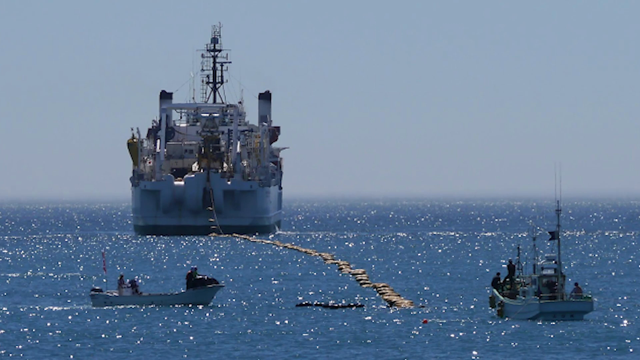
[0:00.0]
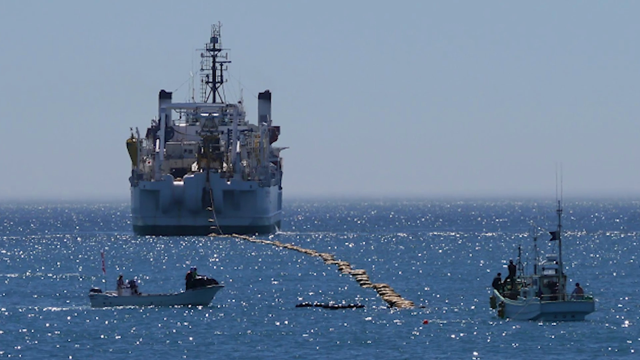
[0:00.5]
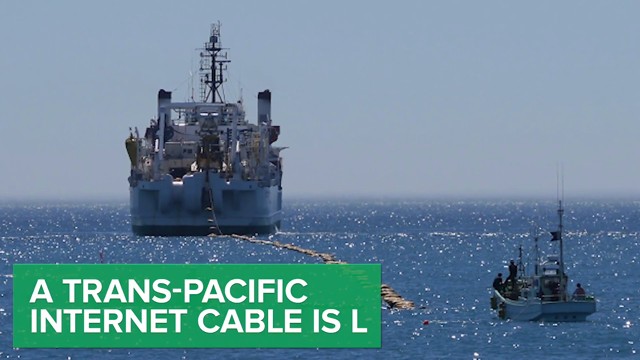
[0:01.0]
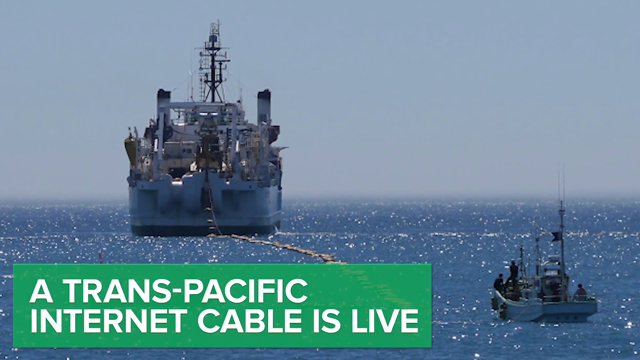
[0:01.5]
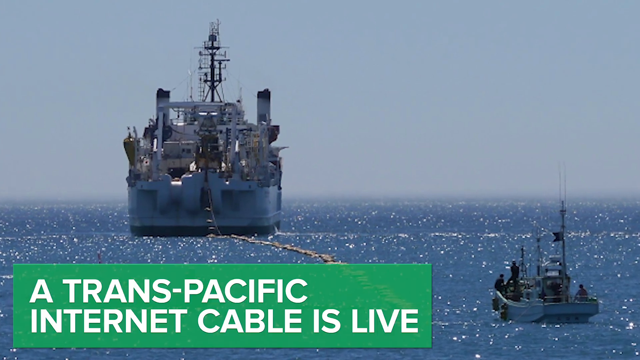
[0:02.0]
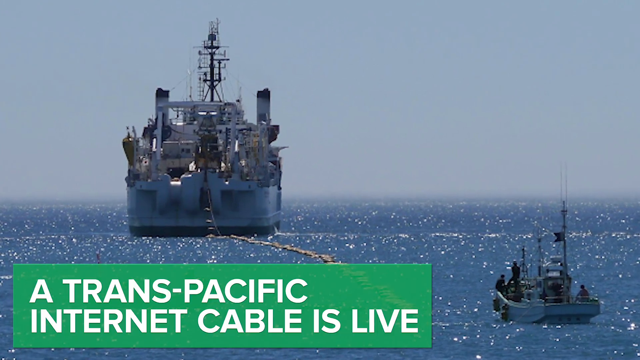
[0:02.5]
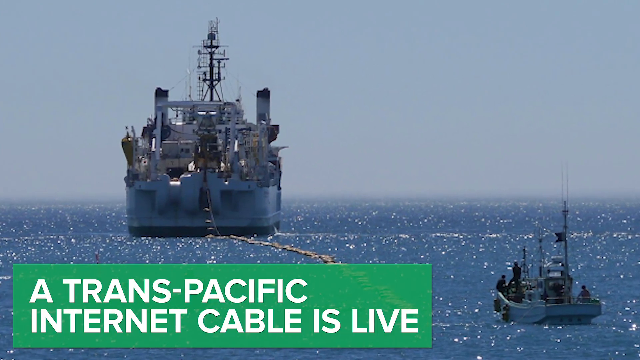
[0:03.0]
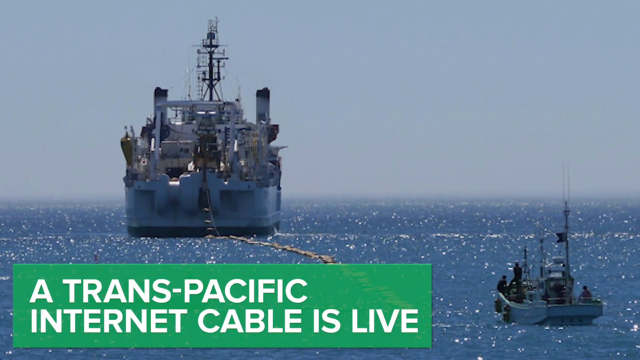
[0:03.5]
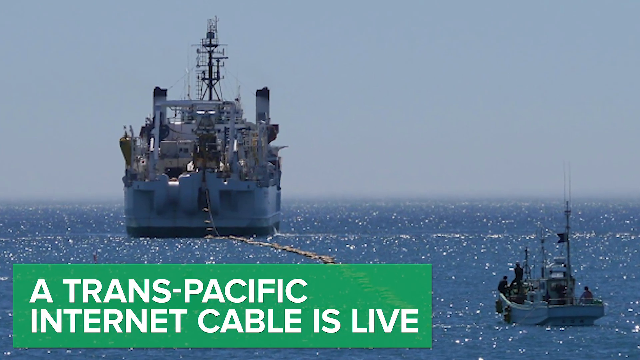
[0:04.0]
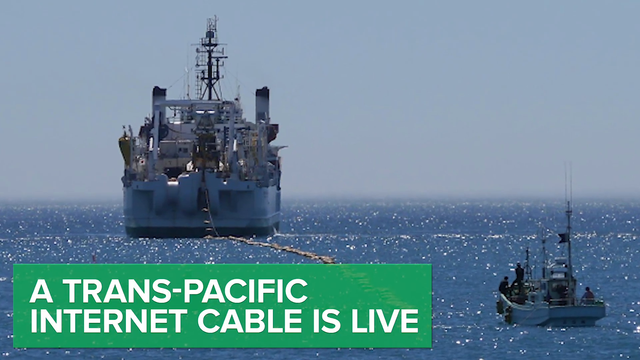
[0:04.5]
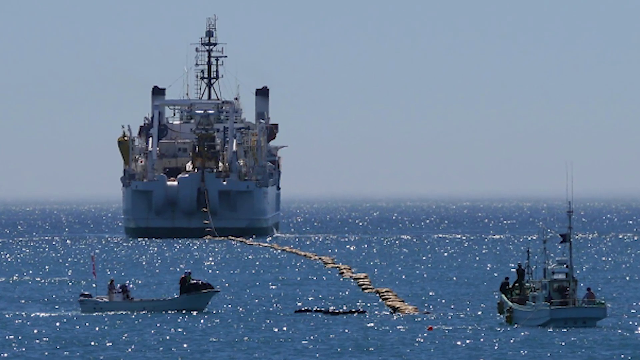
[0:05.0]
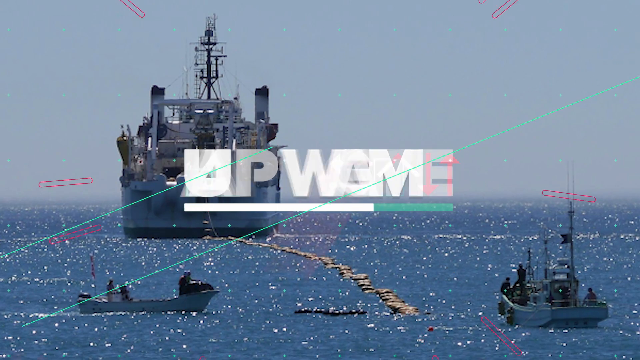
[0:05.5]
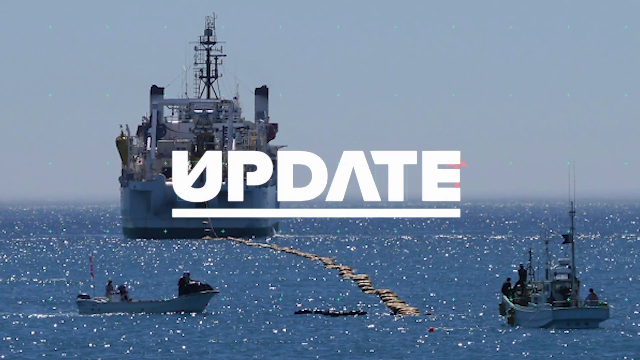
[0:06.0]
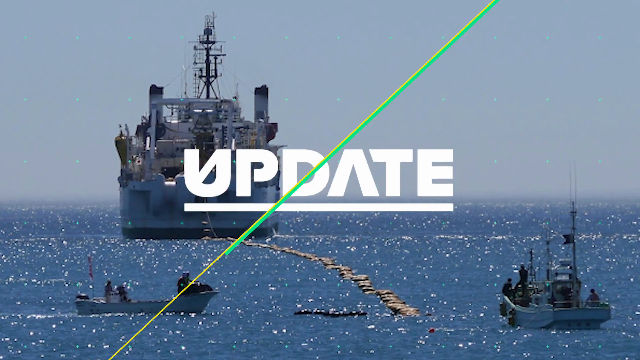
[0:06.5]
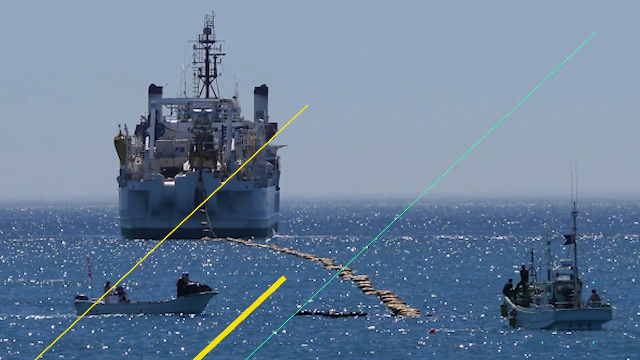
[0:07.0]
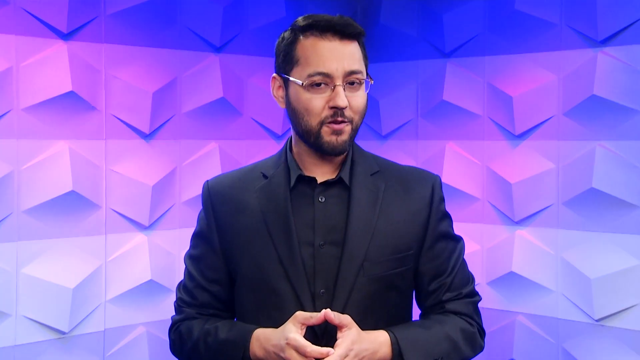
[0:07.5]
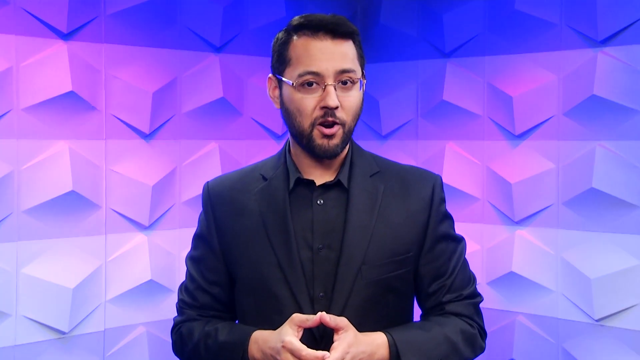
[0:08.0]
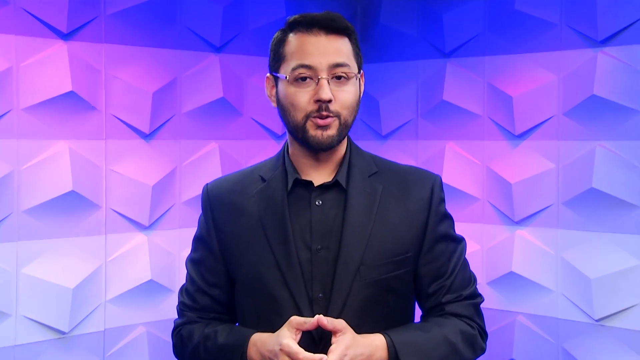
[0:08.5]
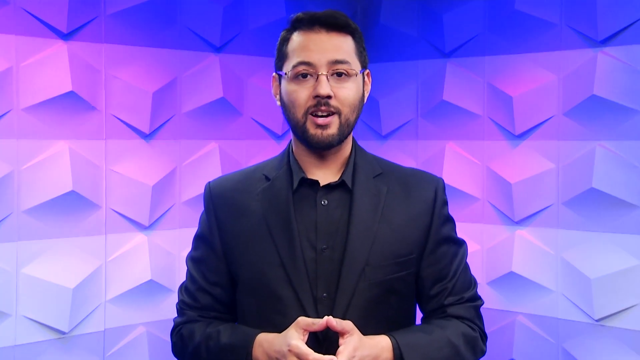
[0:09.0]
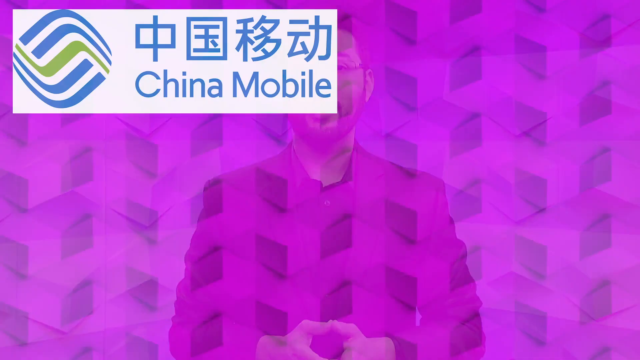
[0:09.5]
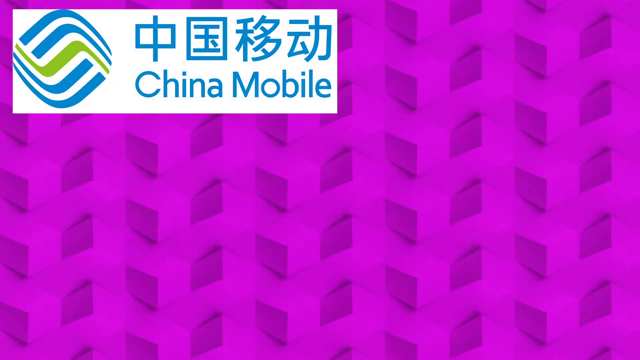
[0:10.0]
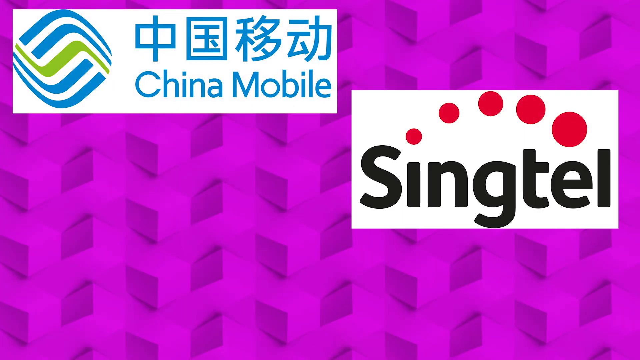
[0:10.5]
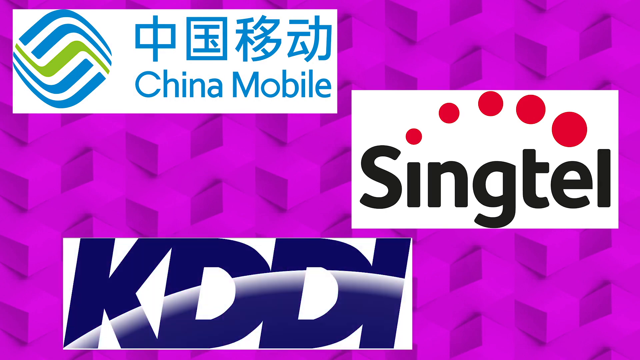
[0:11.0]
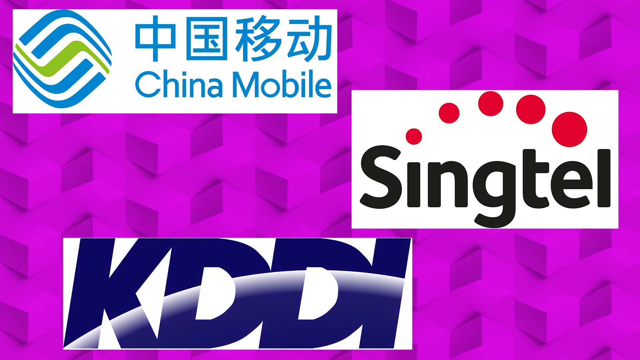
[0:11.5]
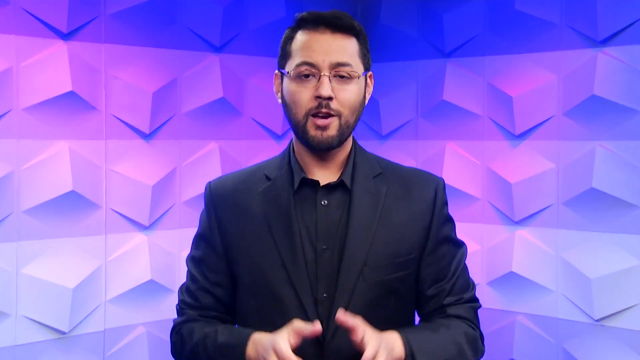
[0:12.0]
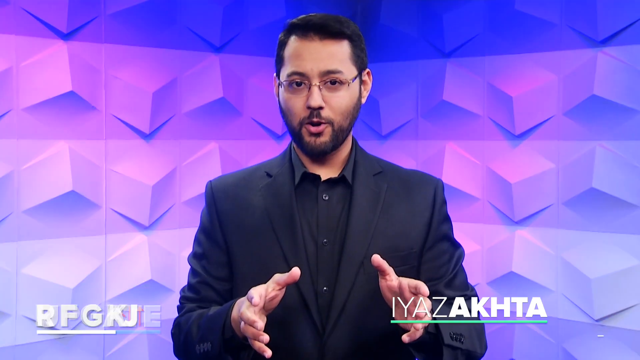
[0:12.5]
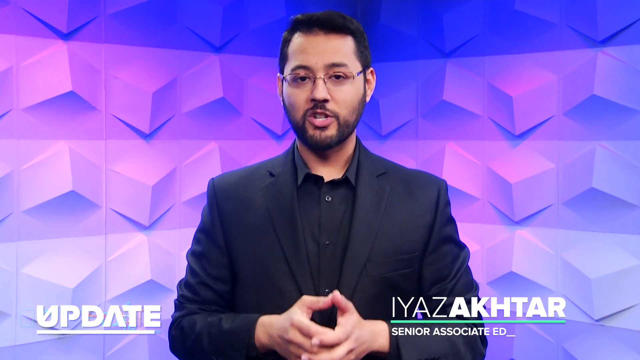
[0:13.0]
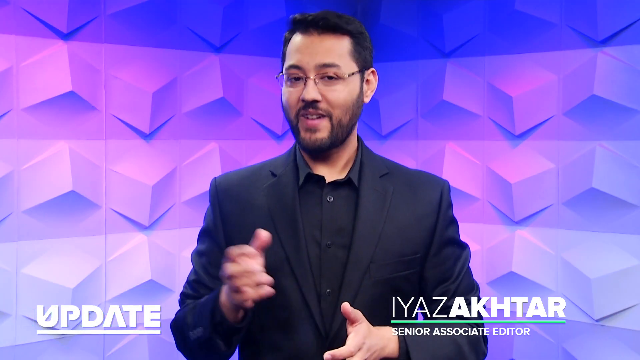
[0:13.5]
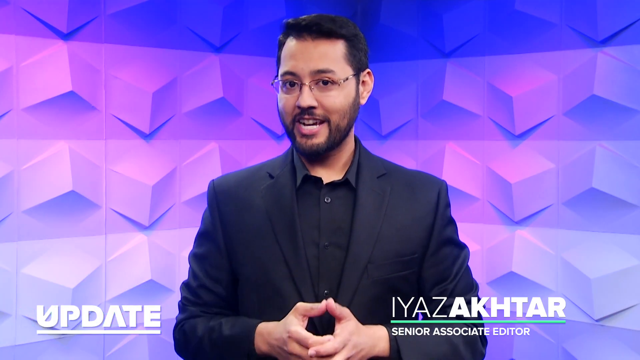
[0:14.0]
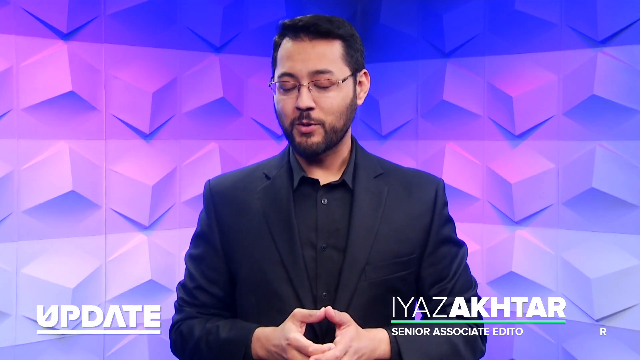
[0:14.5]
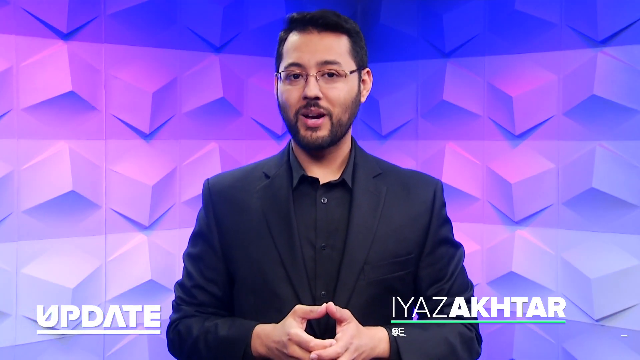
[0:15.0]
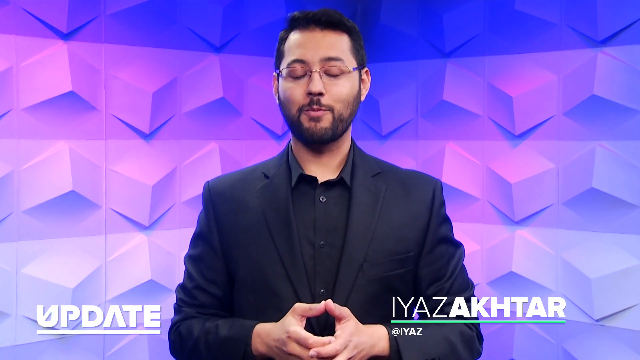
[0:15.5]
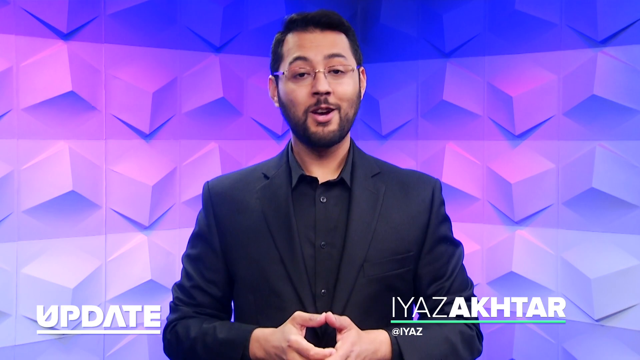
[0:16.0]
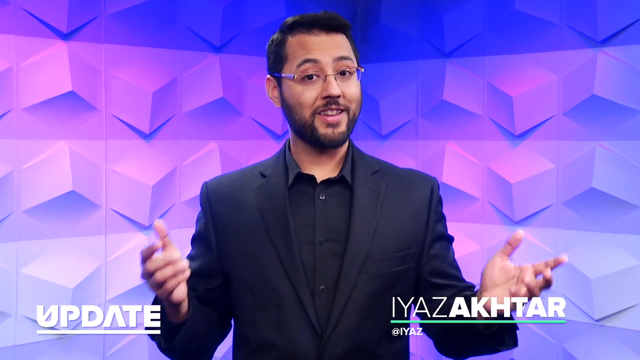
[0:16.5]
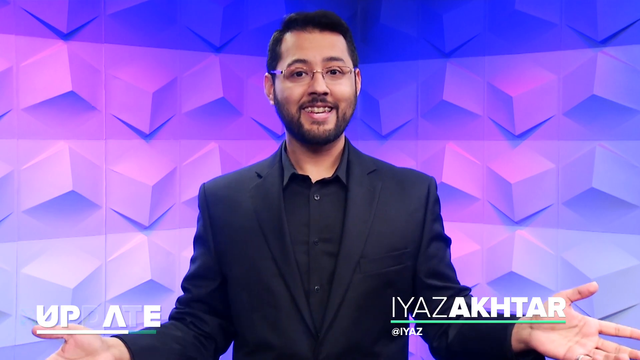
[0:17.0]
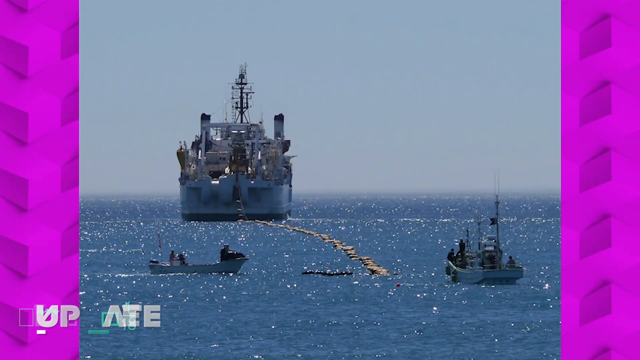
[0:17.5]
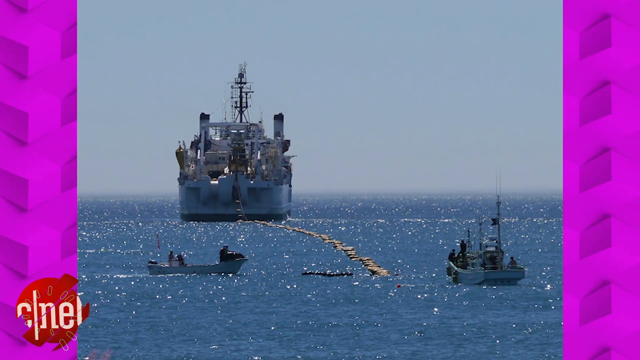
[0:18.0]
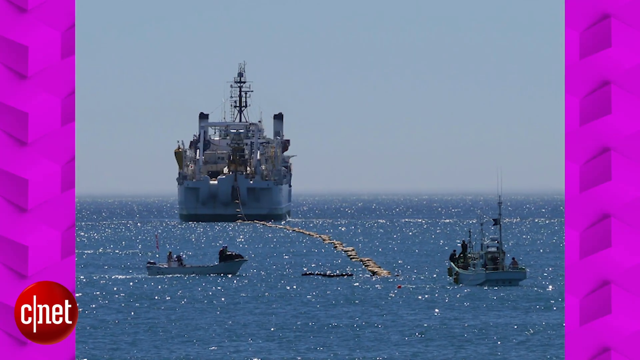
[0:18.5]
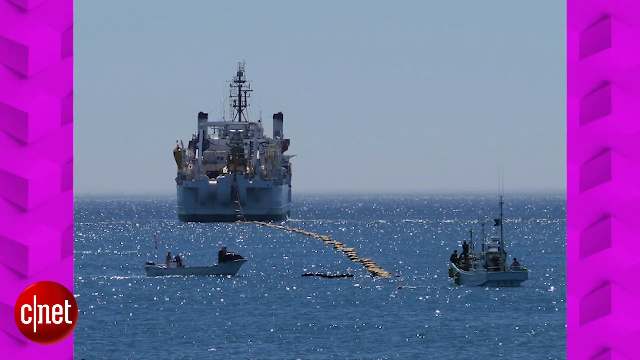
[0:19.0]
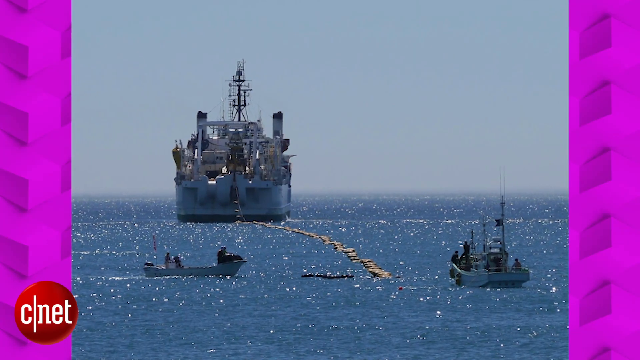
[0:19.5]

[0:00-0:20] A headline reads "Trans-Pacific internet cables," and behind it is a big ship on an ocean; the picture zooms in. The scene then shifts to a man in a black suit in a well-decorated studio. The camera focuses on him as he uses his hands and facial expressions, apparently explaining what the headline is about. He looks focused as he speaks.